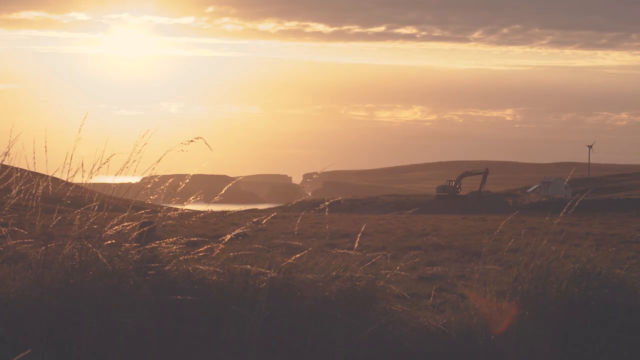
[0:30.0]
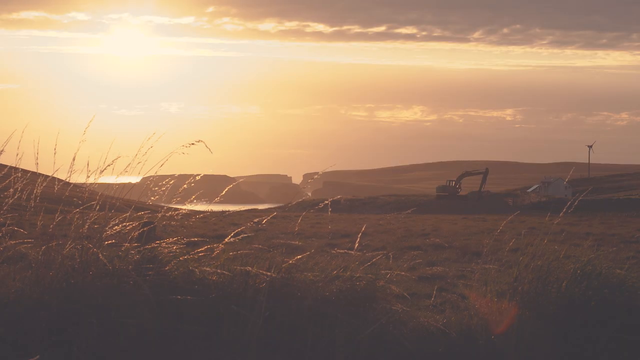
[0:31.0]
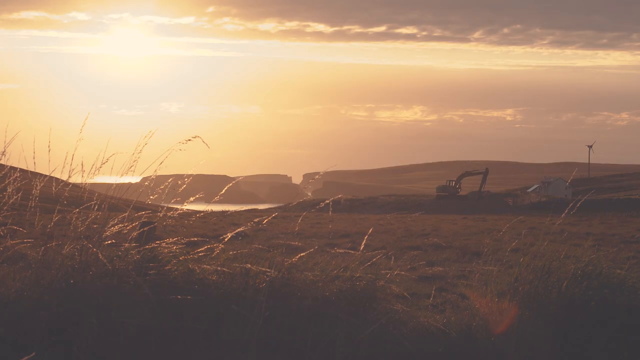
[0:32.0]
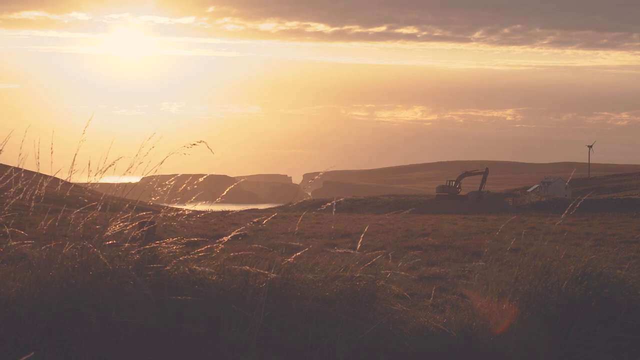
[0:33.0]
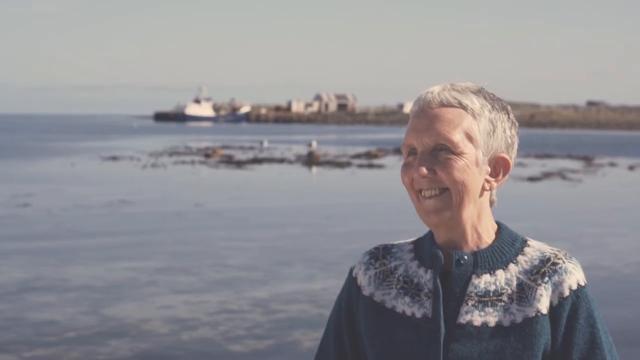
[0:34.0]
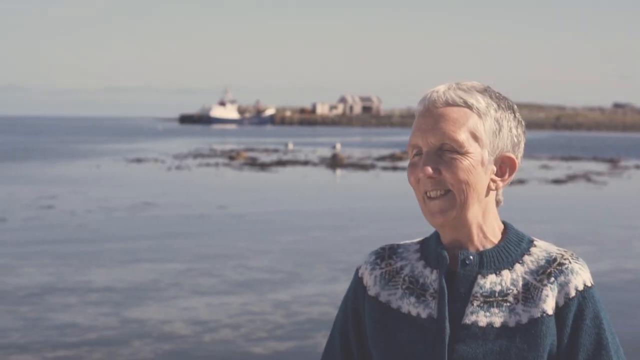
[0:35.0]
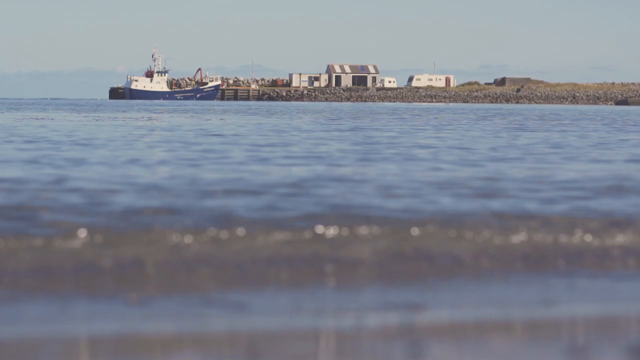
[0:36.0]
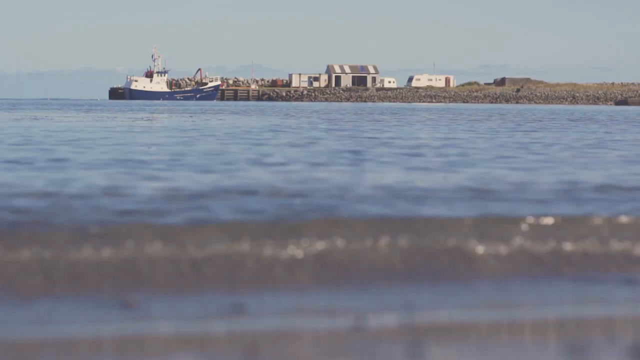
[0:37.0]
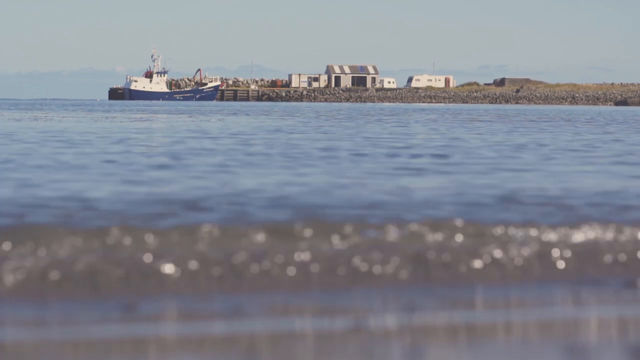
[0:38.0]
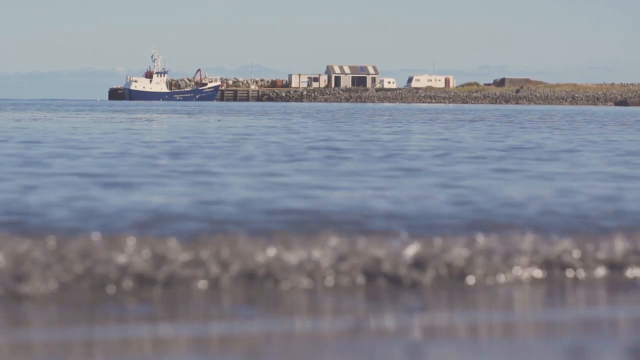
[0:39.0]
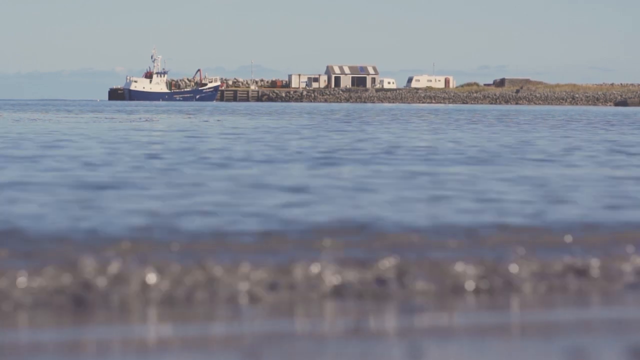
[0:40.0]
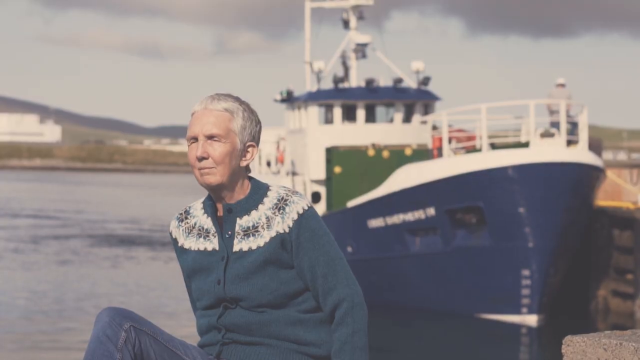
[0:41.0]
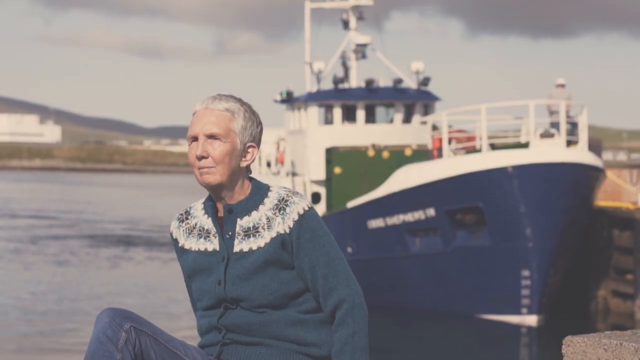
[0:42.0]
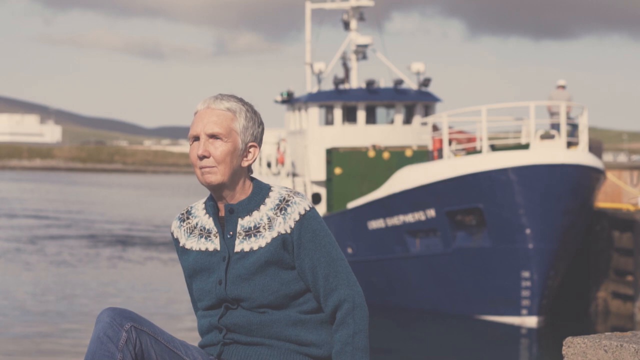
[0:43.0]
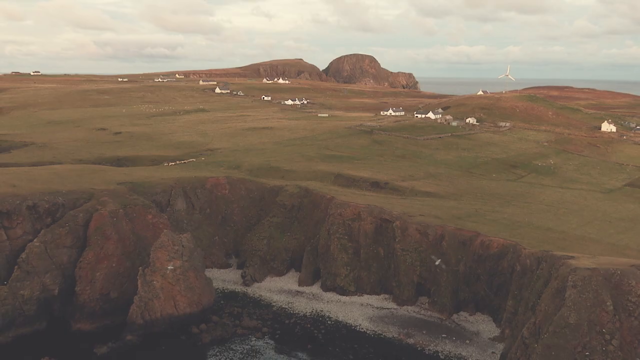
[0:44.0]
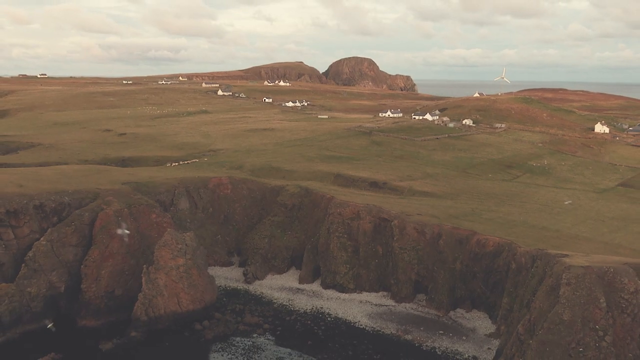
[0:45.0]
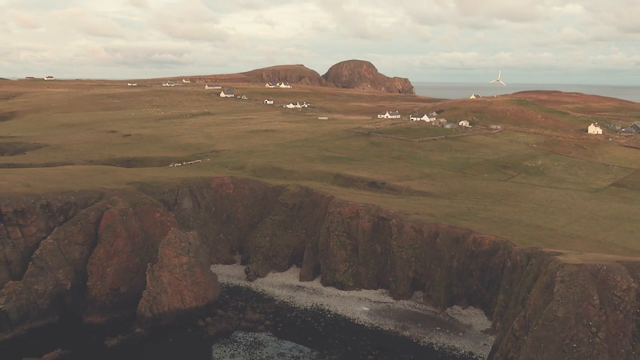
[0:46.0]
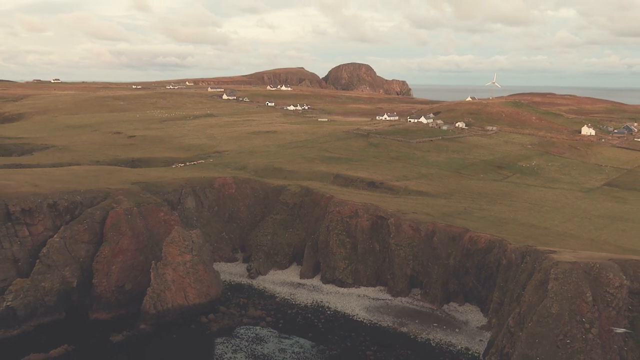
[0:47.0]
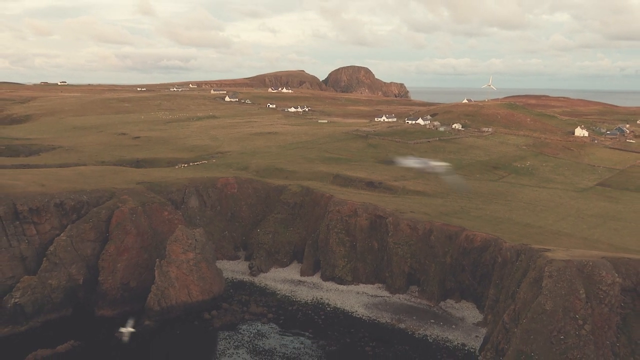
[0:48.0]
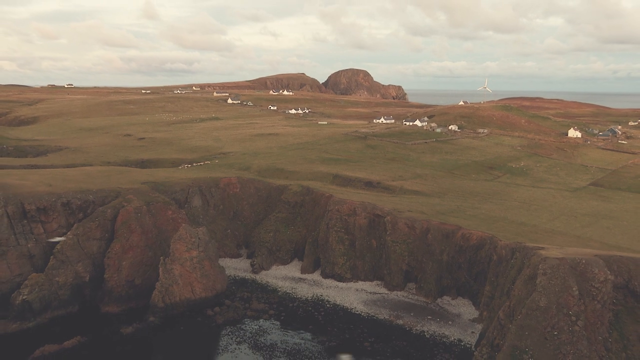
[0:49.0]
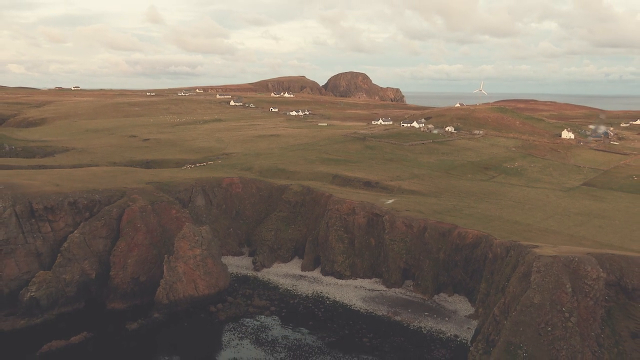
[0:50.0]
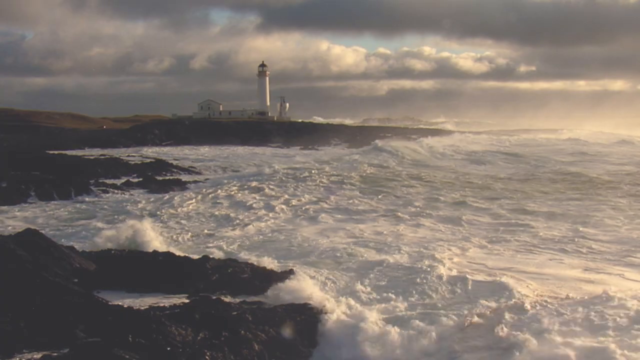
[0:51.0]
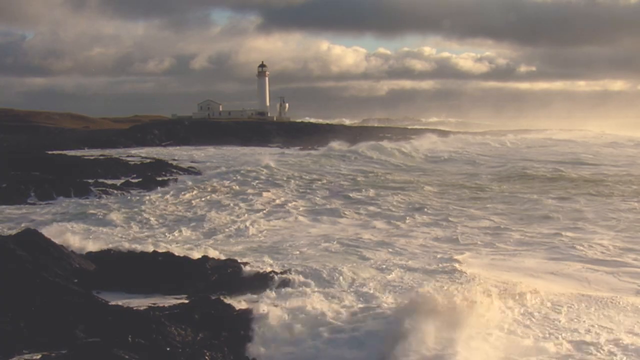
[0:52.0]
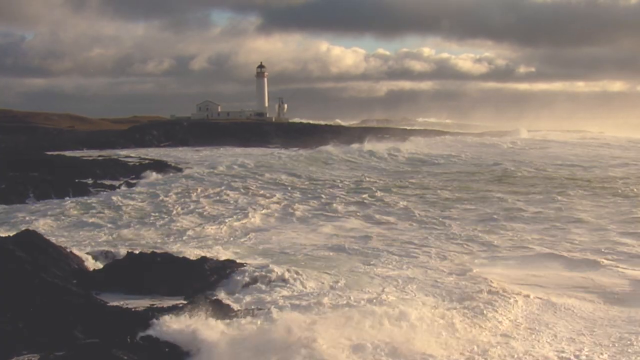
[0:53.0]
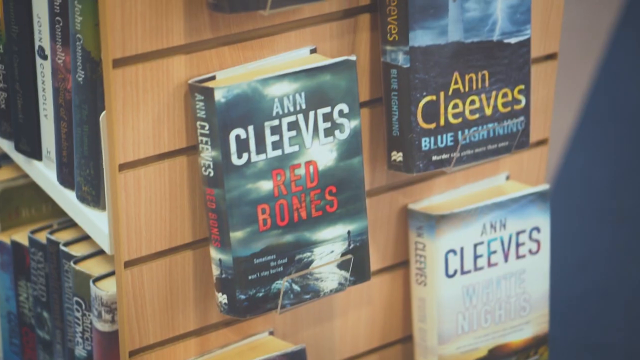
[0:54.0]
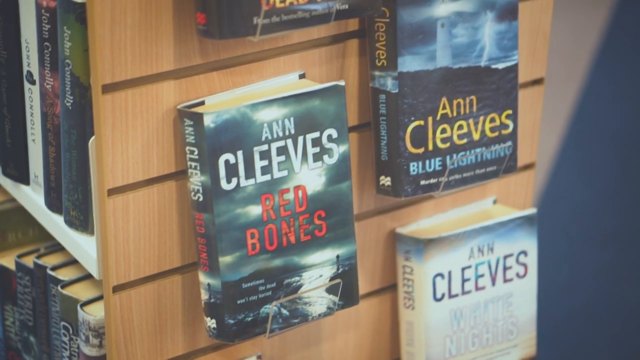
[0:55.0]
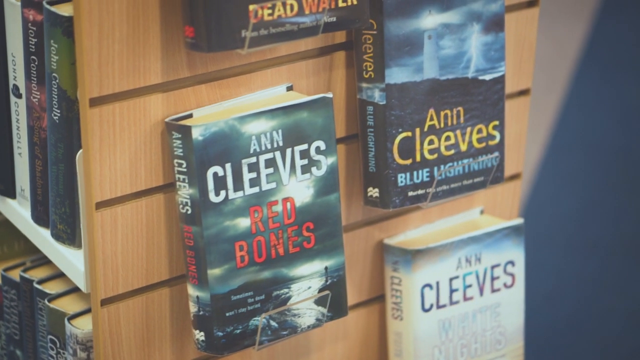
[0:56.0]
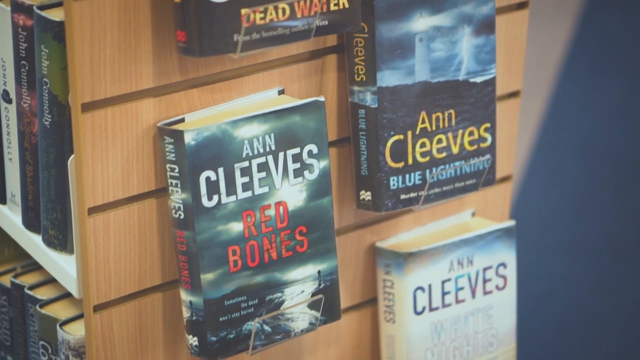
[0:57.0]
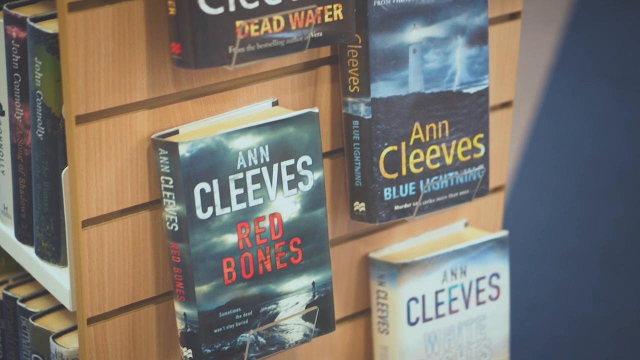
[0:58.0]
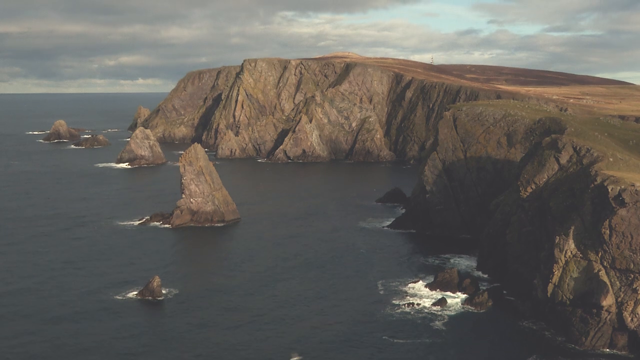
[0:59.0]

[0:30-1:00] A view of the Shetland landscape with the sun going down casts a very orange ambient light over the land. There seems to be a digger in the background, with wind turbines alongside it to the right. The video cuts to the old woman smiling once again, with the Shetland landscape behind her during what looks to be midday, with a whiter ambient light. The light falls on the left side of her face, with shadow on the right, in a three-quarter pose. A very low shot of the water line follows, with waves coming toward the camera; far away in the distance is the blue and white boat seen earlier, alongside the edge of the harbour, with a building on its right and what looks like two caravans in its driveway. Back on the old woman, she looks more sombre, staring off into the distance with the boat and the landscape behind her. Then comes a bird's-eye view of the island: green grass and landscape, houses in the distance, and birds flying by just below the cliffside. A wide horizontal shot of the cliffs and sea shows a lighthouse in the background; the weather is much darker and the sea seems much stormier. The video then cuts to a bookshop, where the camera is up close on a number of novels on the shelves by different authors, John Connolly being one of them. Closer to the camera are four novels on a shelf, all written by Anne Cleaves; three of the titles can be seen: "Dead Water", "Red Bones" and "Blue Lightning". The video then cuts to the cliffside of Shetland once again.